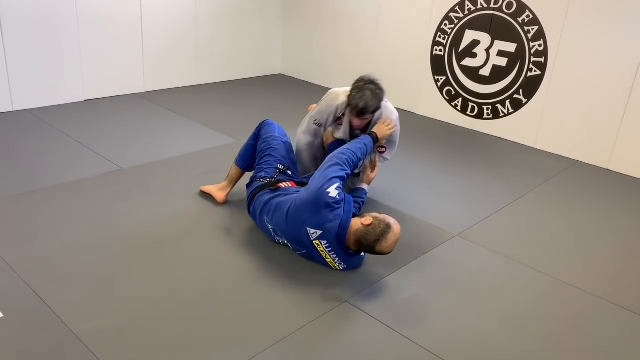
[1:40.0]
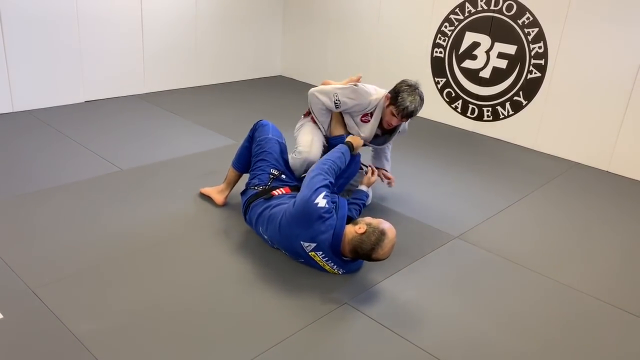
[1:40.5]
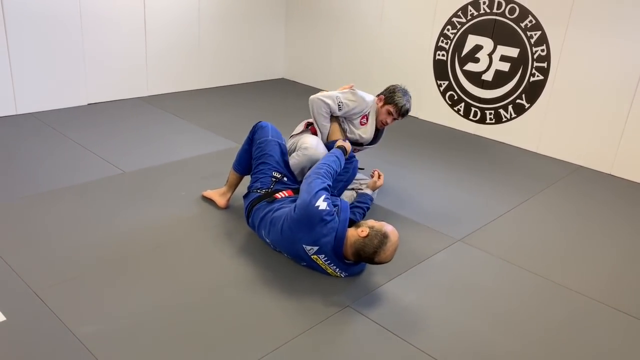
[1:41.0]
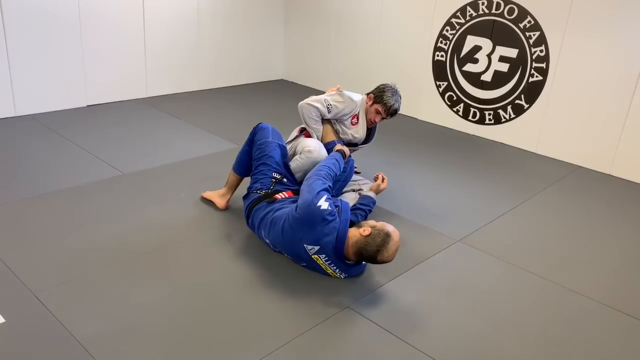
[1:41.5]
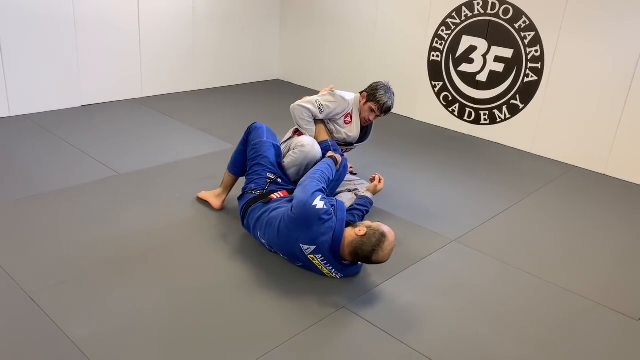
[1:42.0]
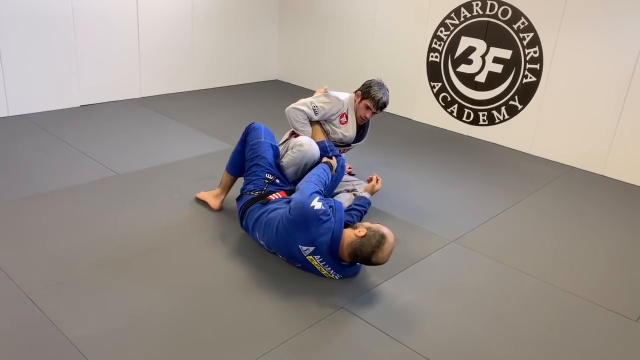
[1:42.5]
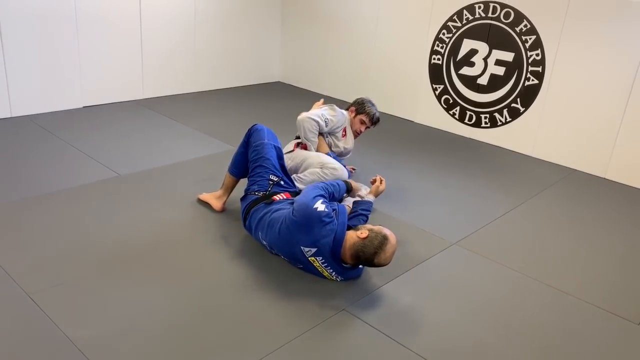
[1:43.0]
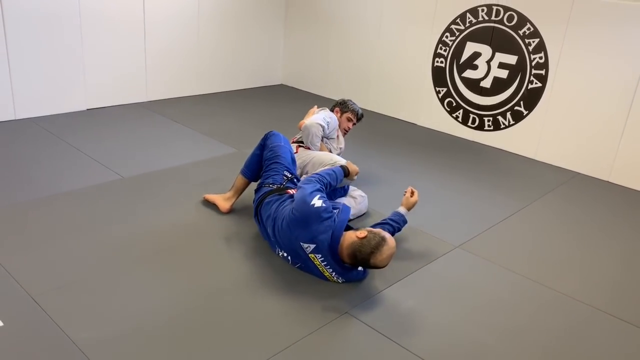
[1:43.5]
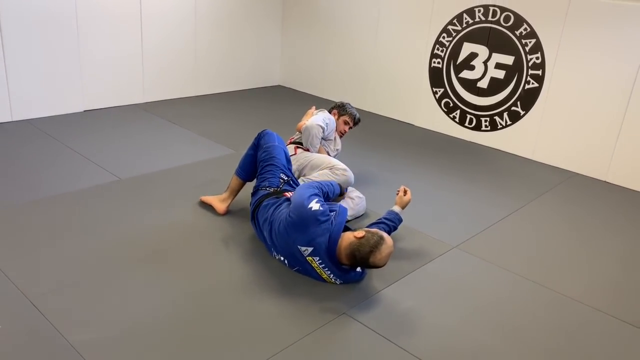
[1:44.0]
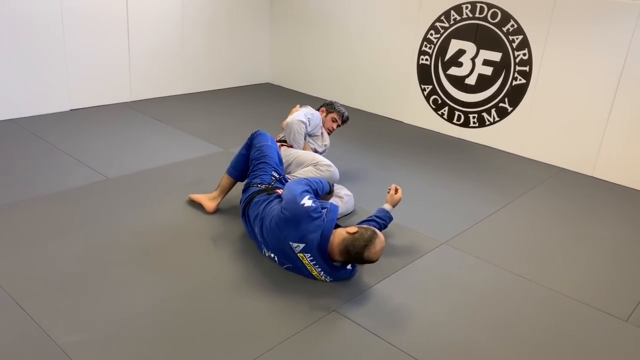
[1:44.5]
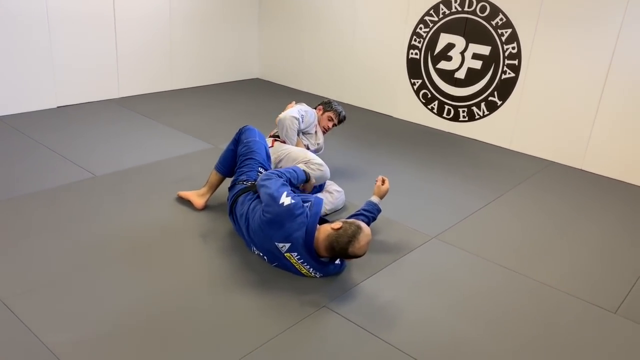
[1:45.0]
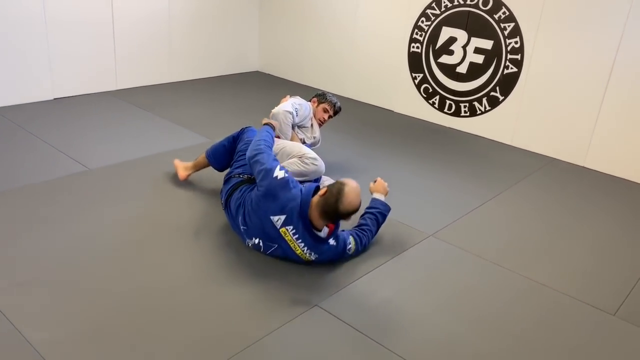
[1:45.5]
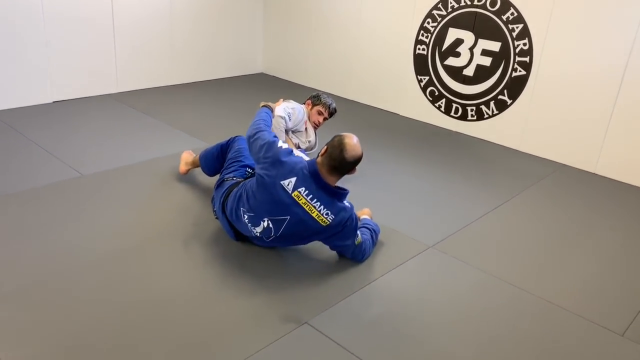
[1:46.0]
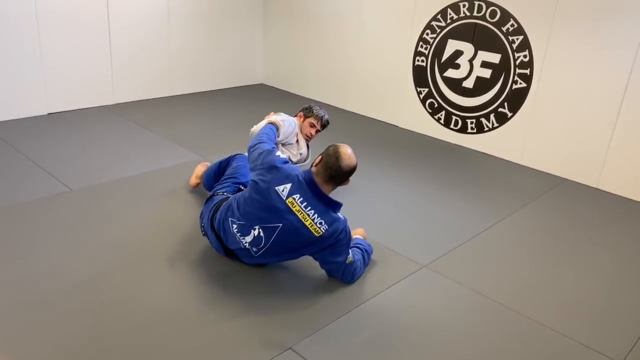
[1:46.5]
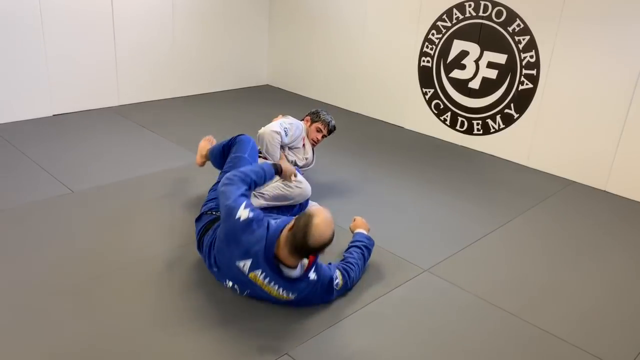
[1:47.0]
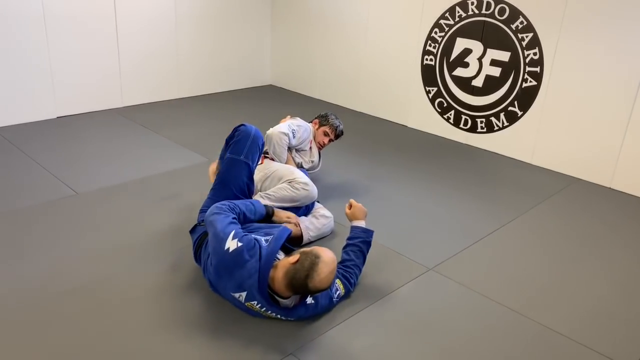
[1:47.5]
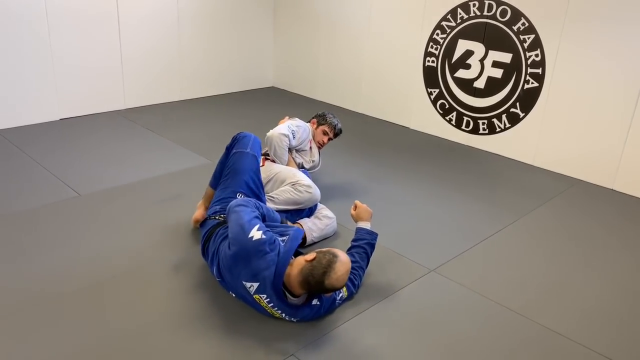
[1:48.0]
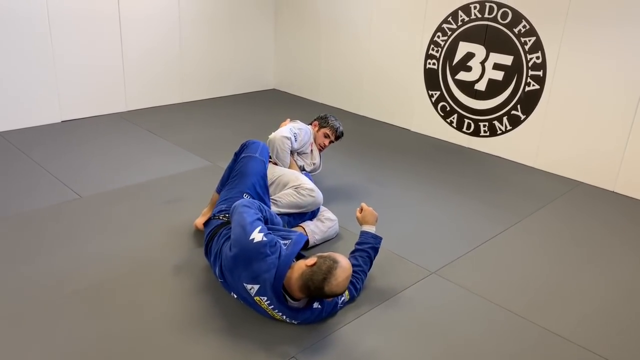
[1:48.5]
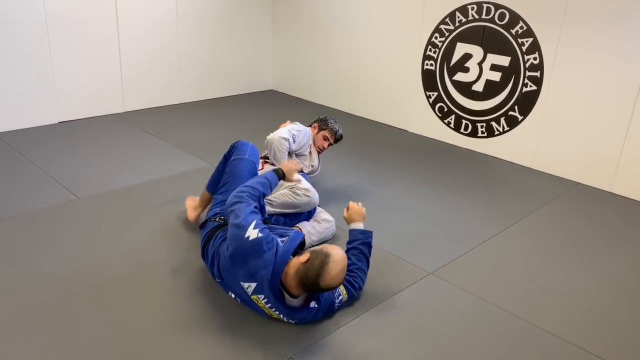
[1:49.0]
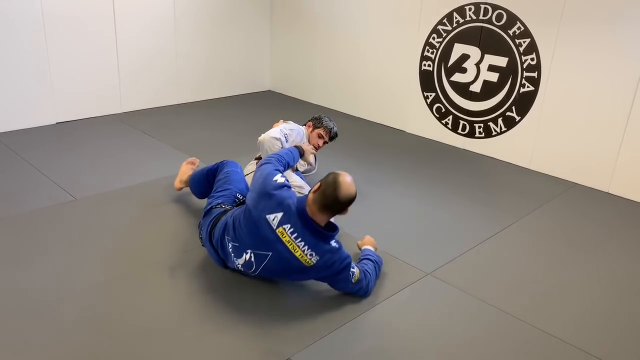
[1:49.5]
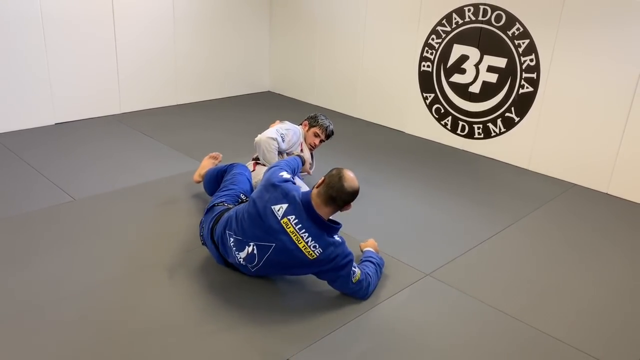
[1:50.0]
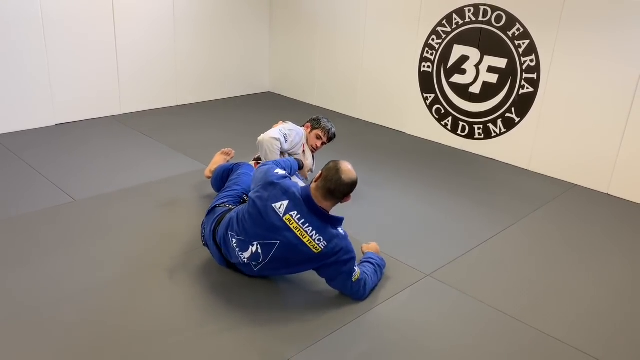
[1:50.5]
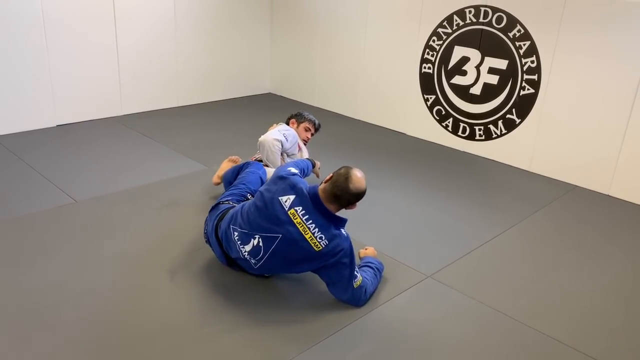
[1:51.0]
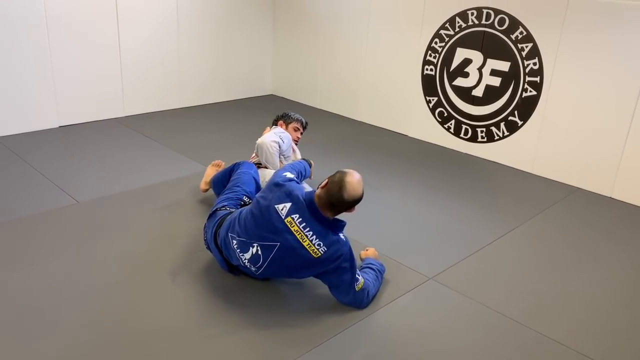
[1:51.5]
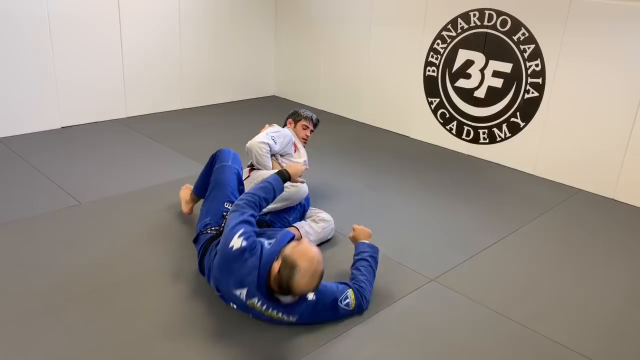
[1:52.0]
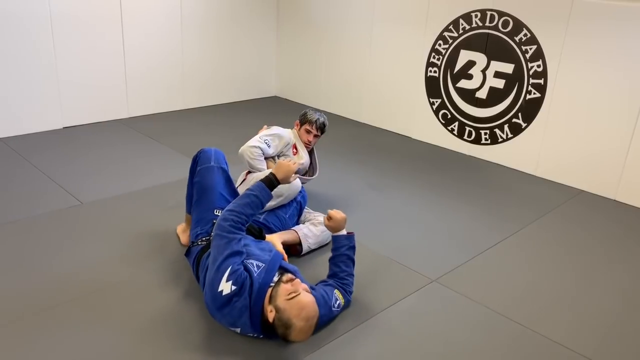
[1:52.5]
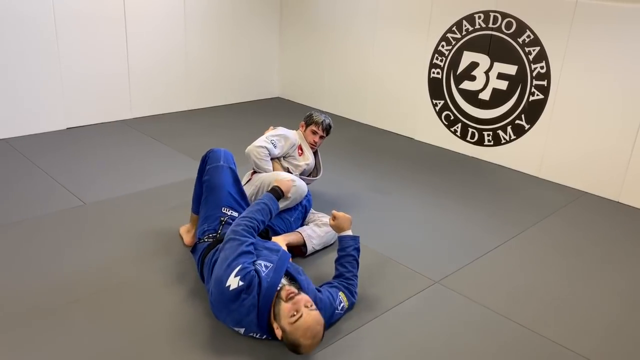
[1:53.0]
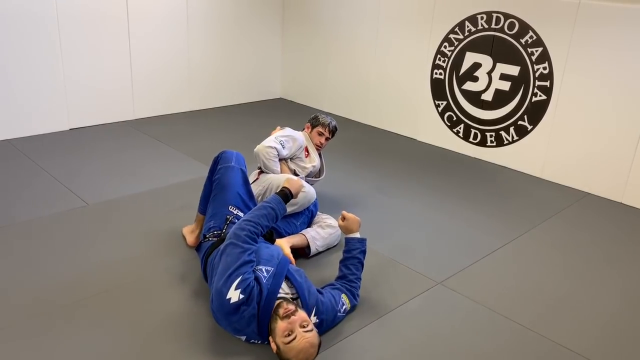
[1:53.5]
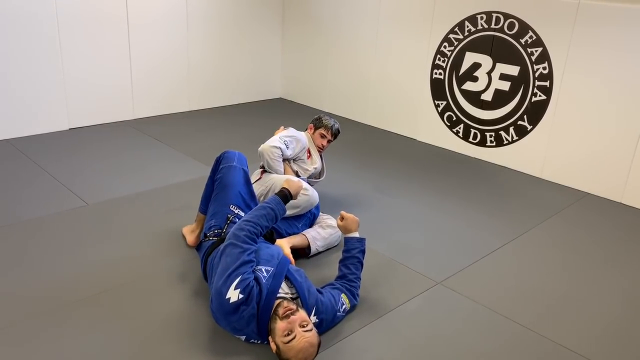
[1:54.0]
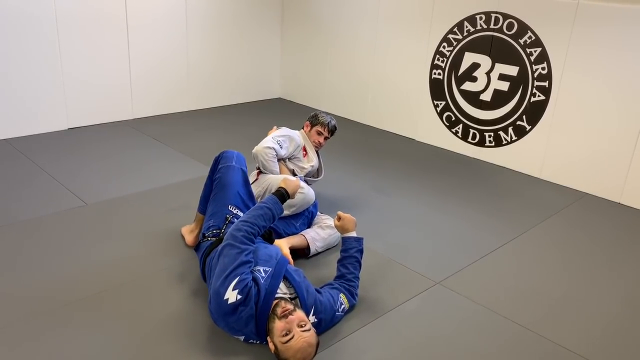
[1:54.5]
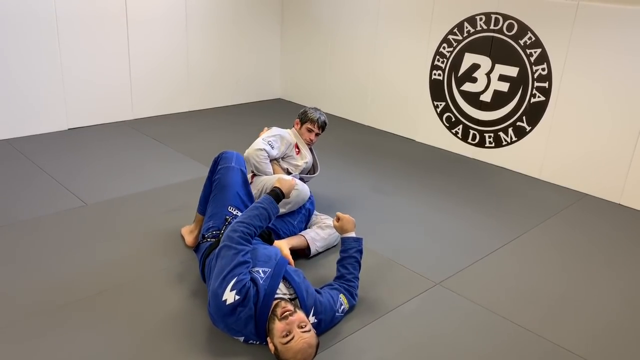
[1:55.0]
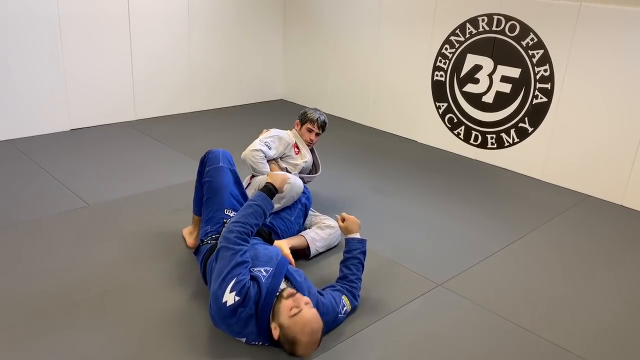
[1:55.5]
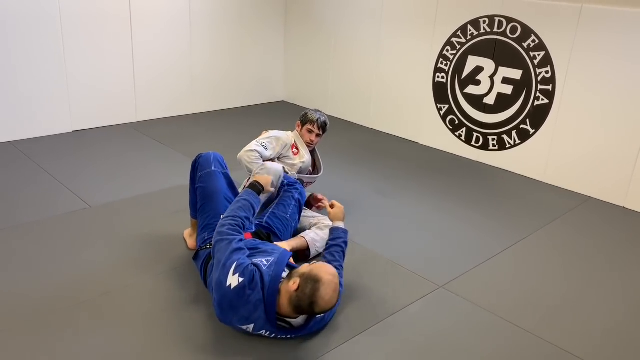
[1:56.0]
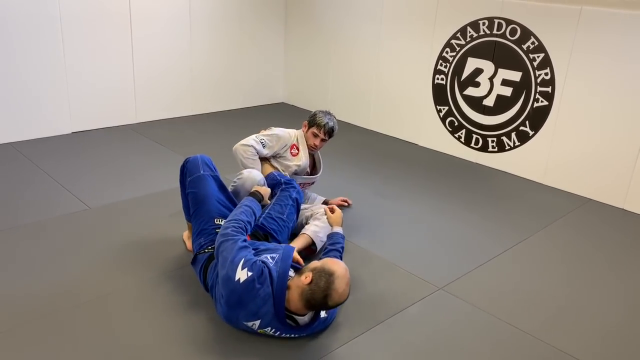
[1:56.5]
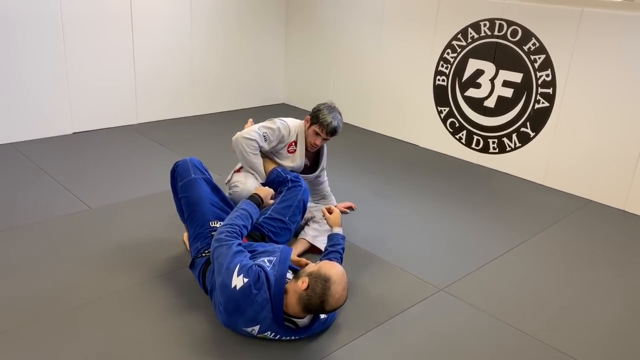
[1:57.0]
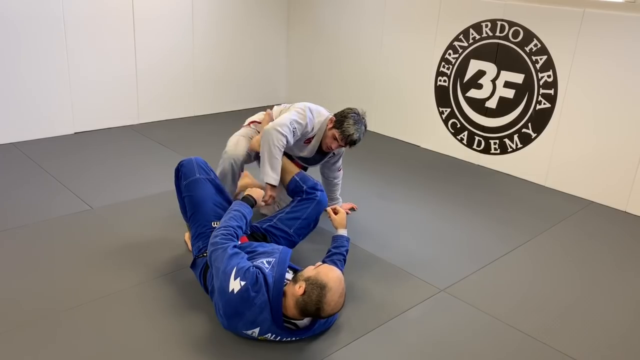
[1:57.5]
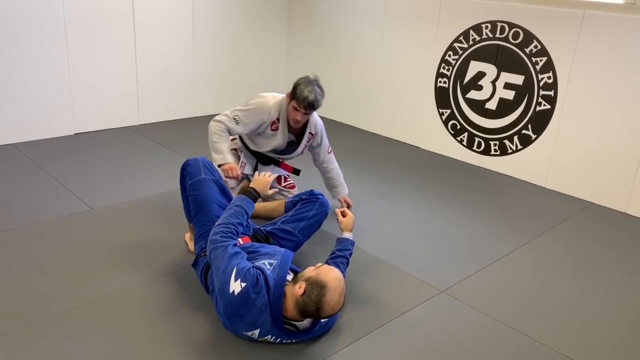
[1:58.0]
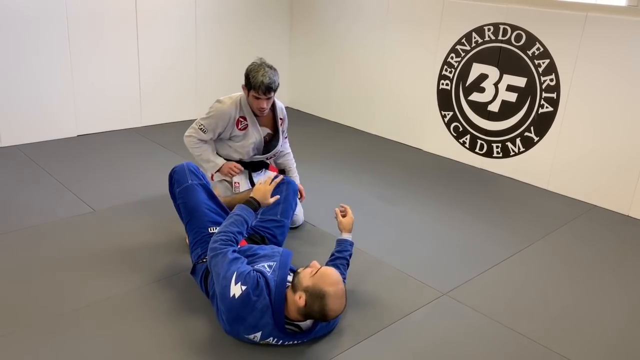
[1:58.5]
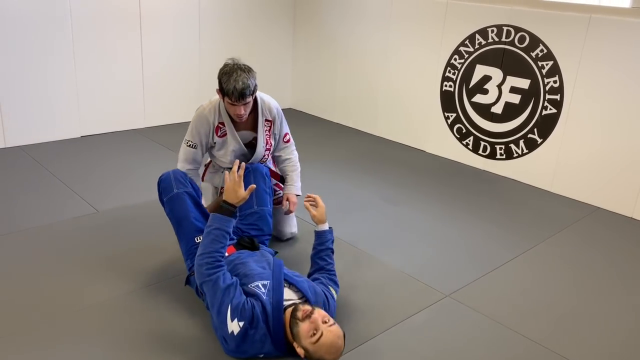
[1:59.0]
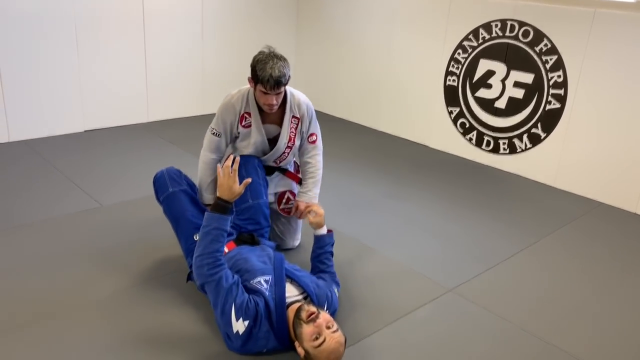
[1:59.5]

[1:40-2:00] The man in white gets into the position again with the right calf of the man in blue in the loop of his right arm. His legs are bent with the other man's leg between them, and he leans back again. This time the man in blue sits up, then lies back down. The man in white lifts his other leg, his left, bent almost at a 90-degree angle, with his right arm bent wider than 90 degrees. The man in blue starts tapping on the other man's leg, tapping out. Then he sits up again, and he appears to be talking, his mouth moving when he lies back.